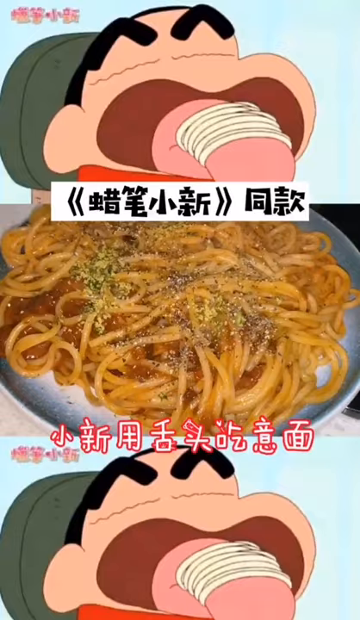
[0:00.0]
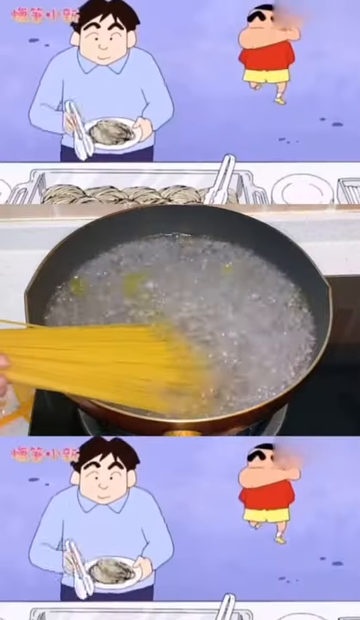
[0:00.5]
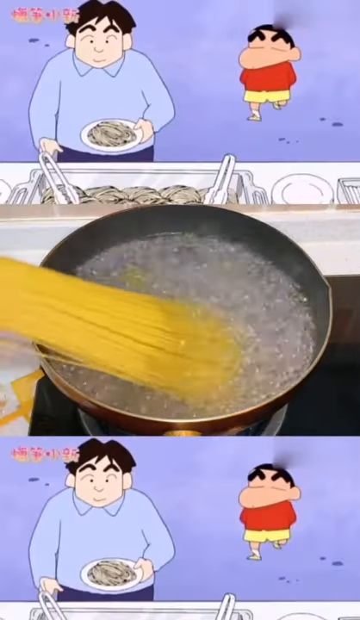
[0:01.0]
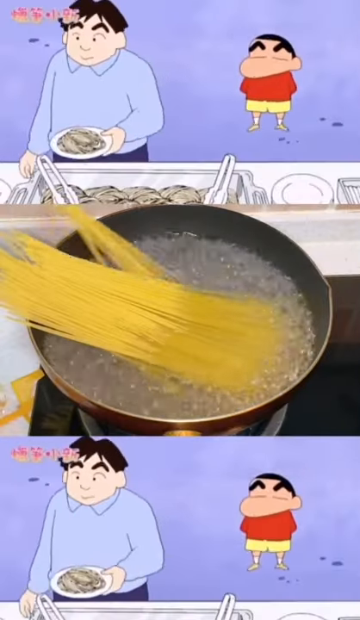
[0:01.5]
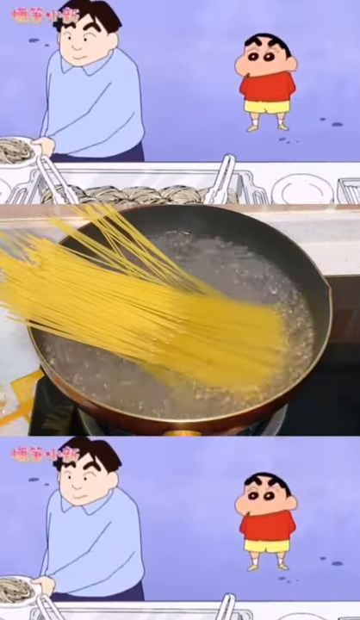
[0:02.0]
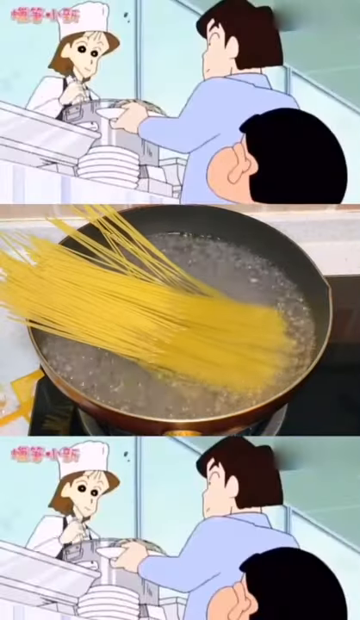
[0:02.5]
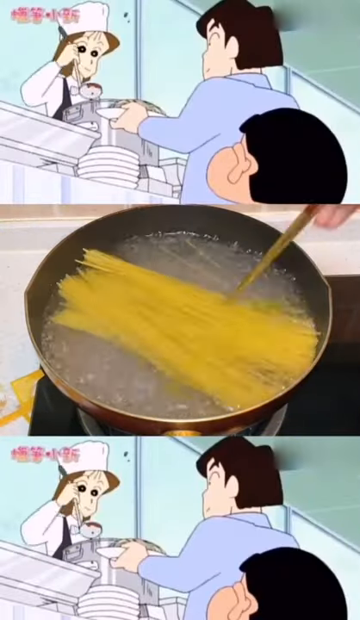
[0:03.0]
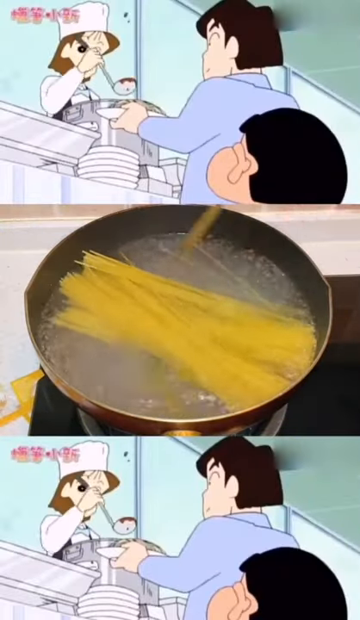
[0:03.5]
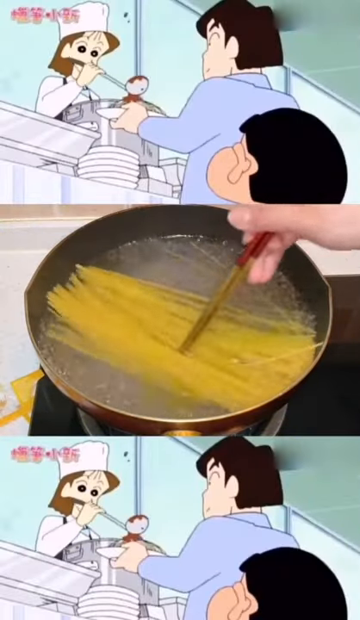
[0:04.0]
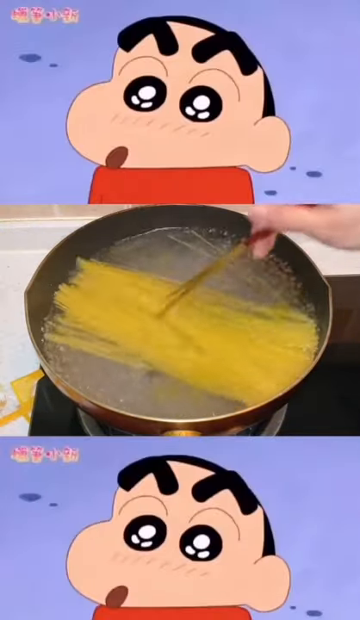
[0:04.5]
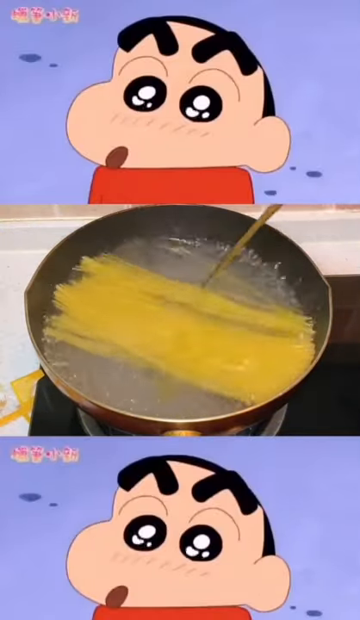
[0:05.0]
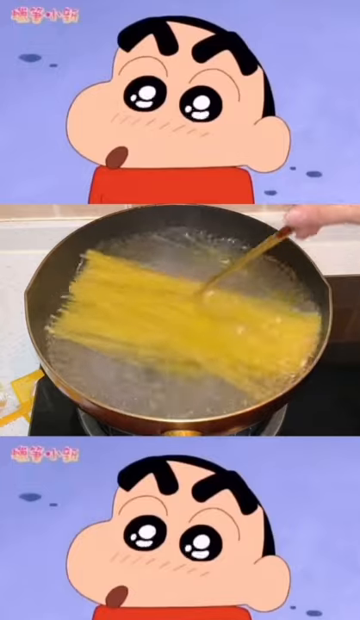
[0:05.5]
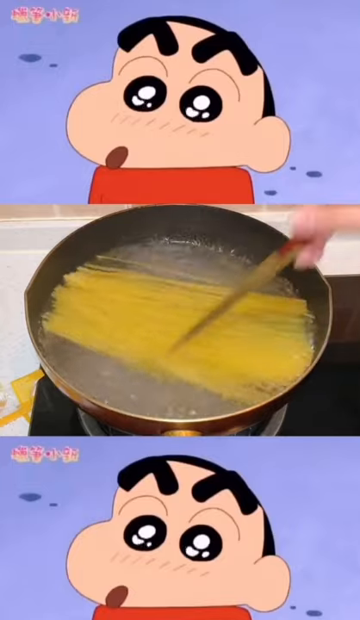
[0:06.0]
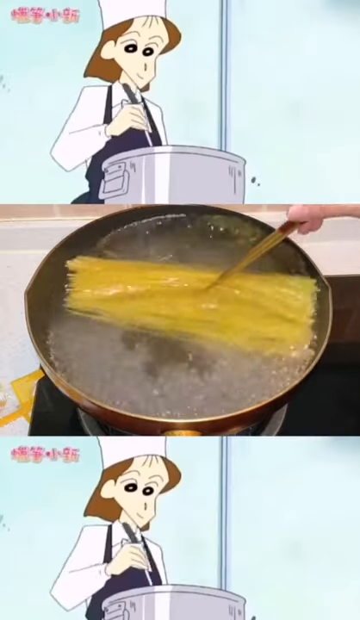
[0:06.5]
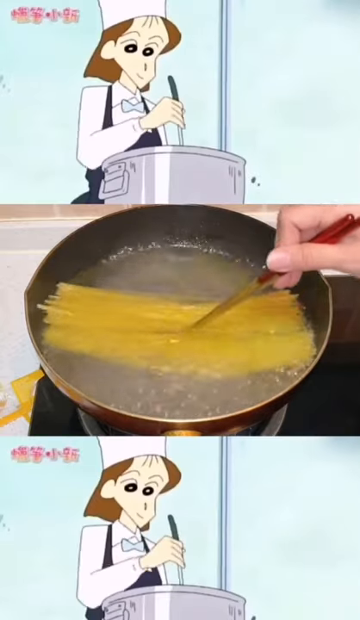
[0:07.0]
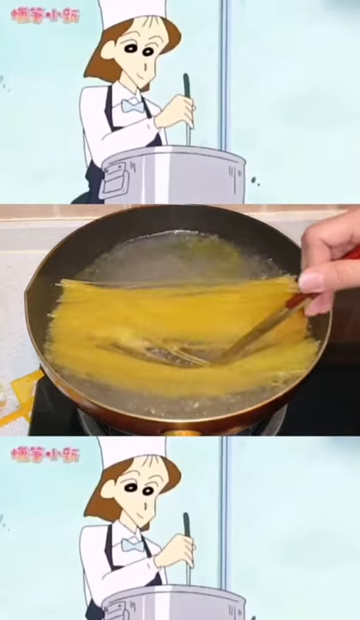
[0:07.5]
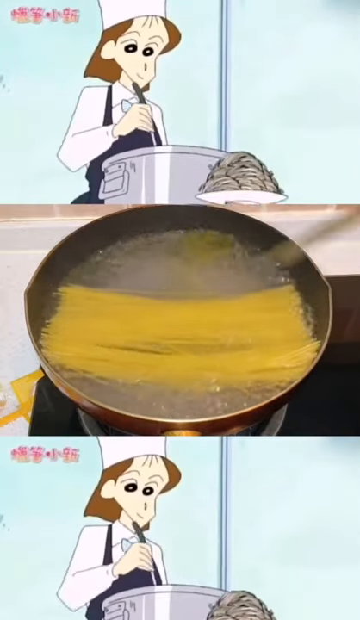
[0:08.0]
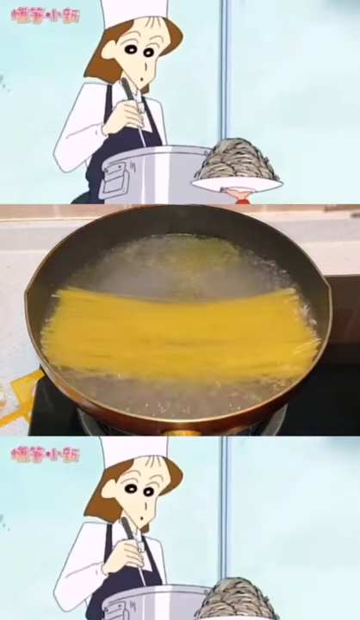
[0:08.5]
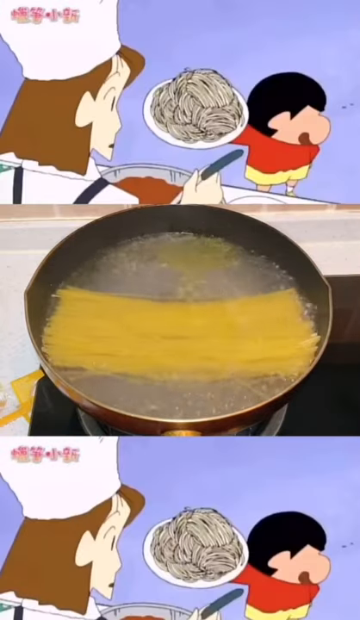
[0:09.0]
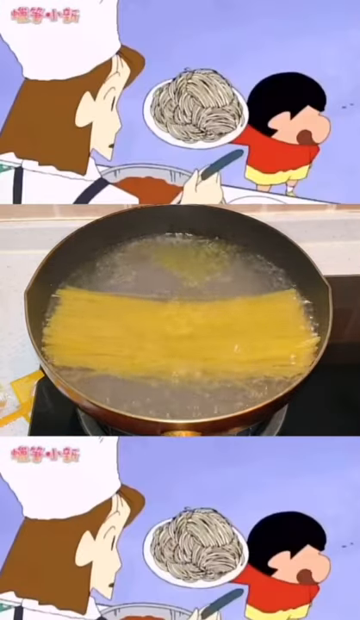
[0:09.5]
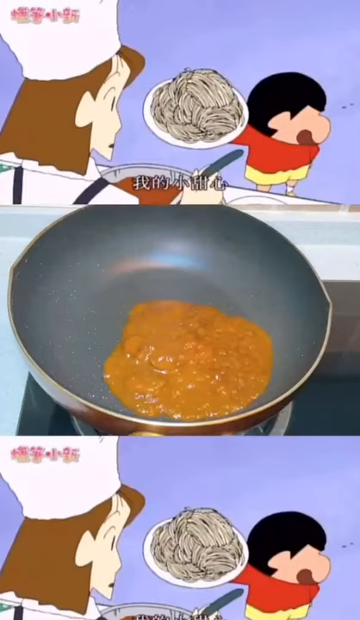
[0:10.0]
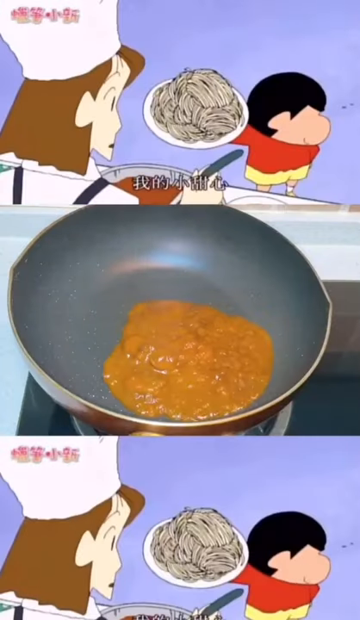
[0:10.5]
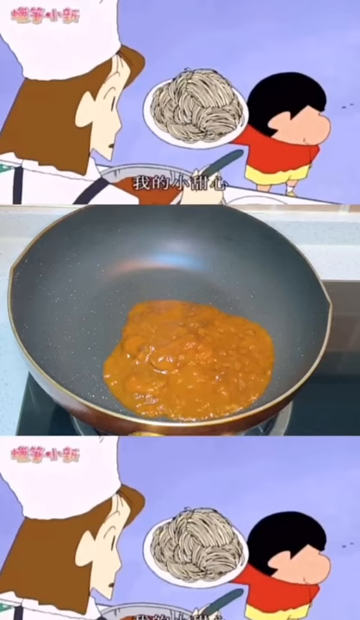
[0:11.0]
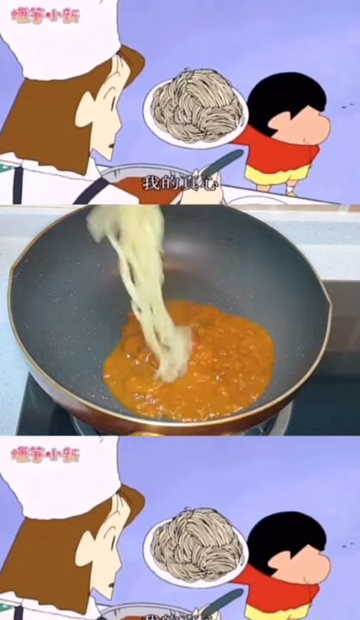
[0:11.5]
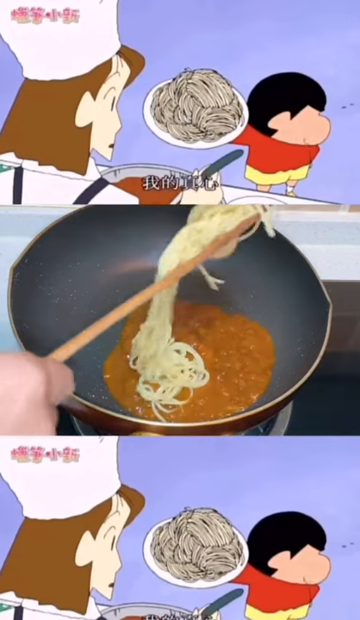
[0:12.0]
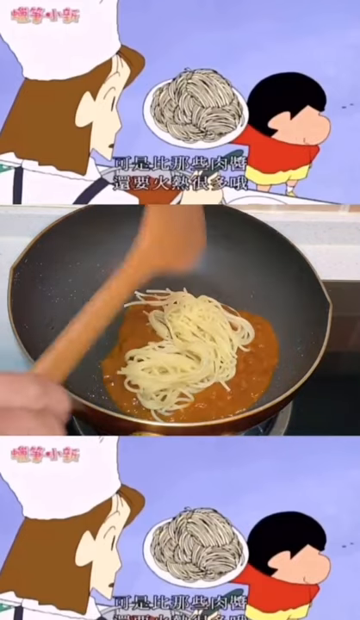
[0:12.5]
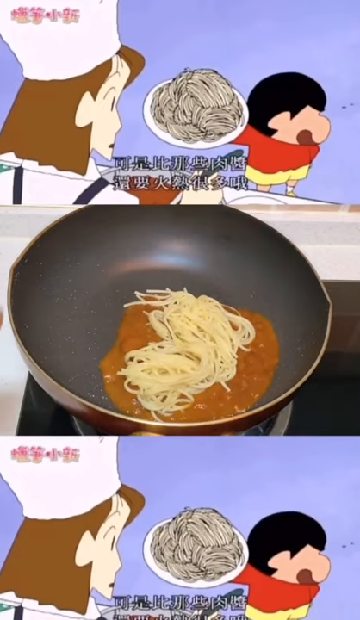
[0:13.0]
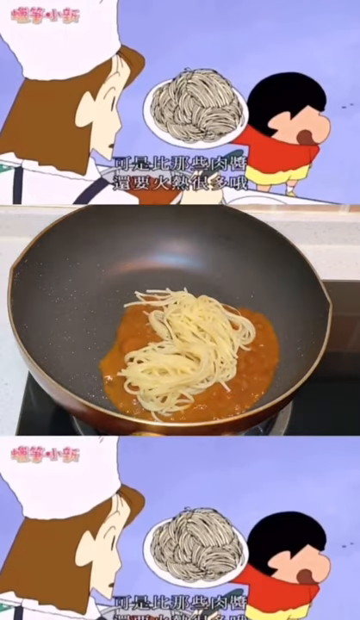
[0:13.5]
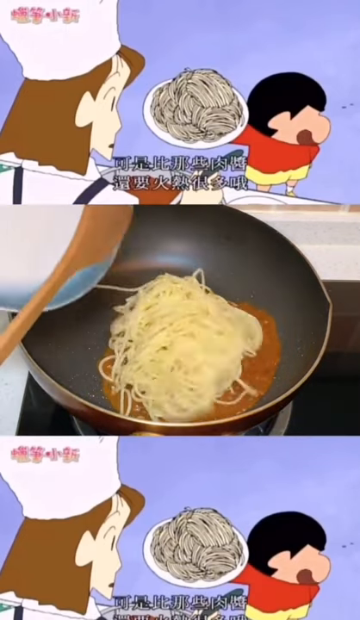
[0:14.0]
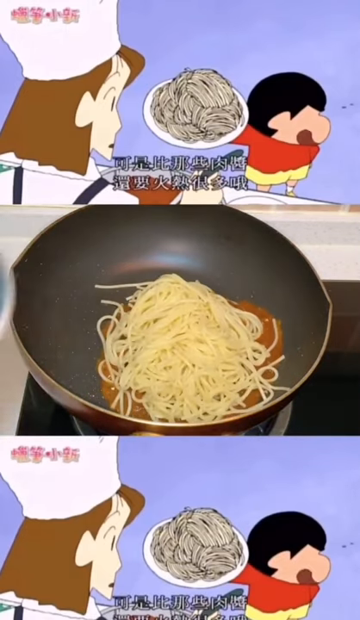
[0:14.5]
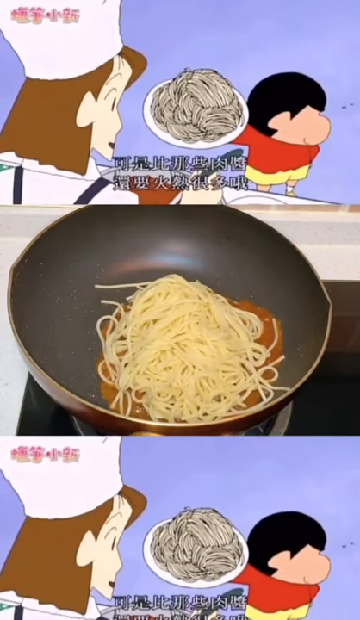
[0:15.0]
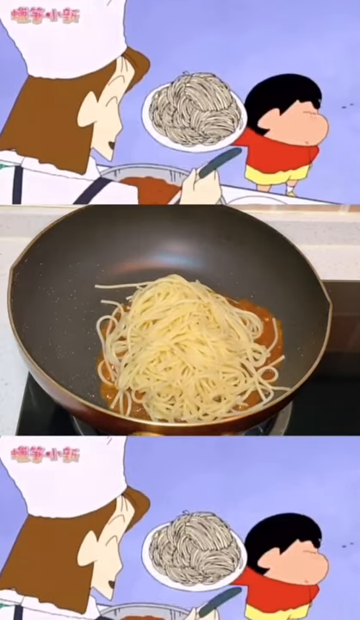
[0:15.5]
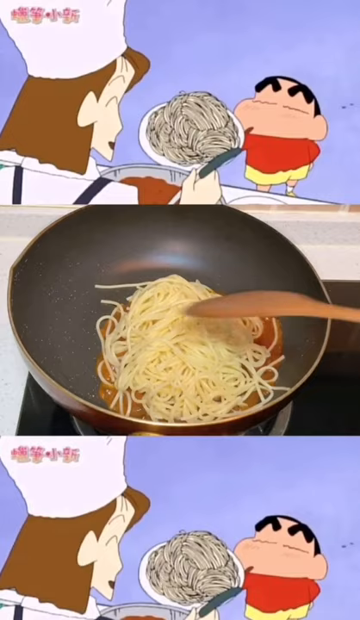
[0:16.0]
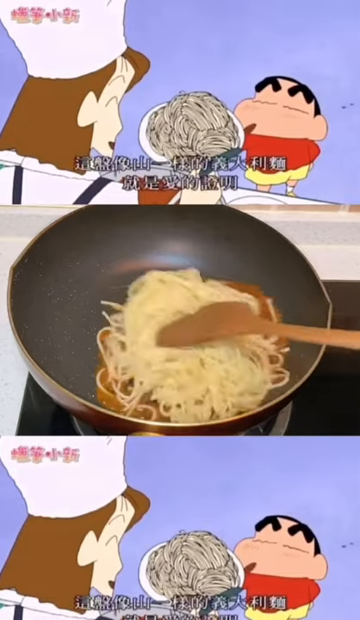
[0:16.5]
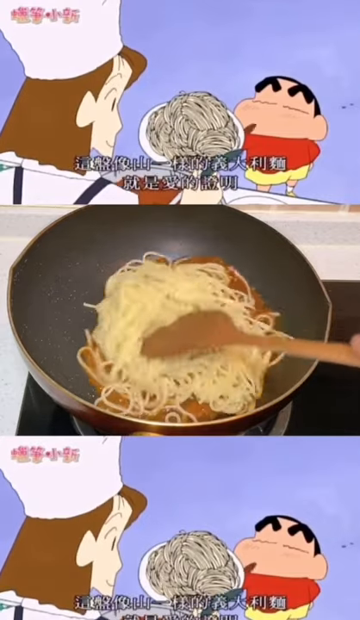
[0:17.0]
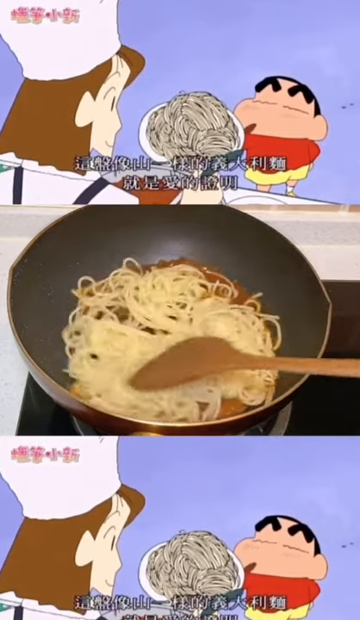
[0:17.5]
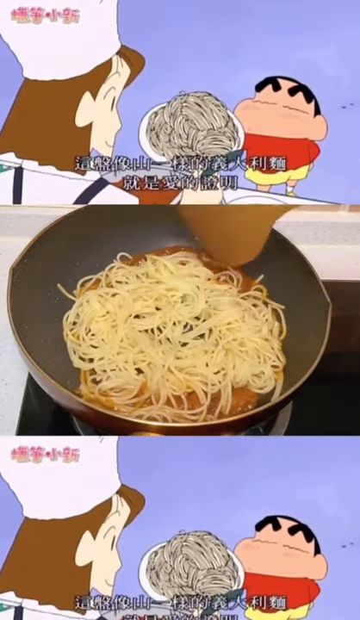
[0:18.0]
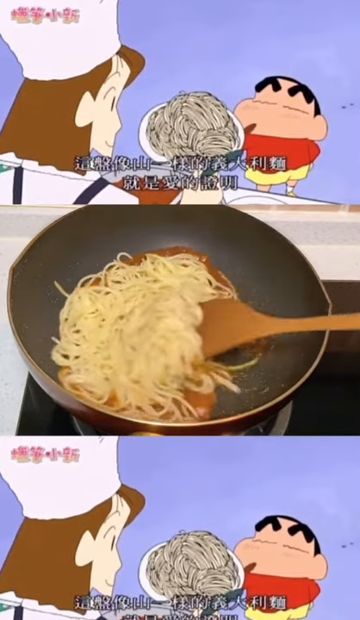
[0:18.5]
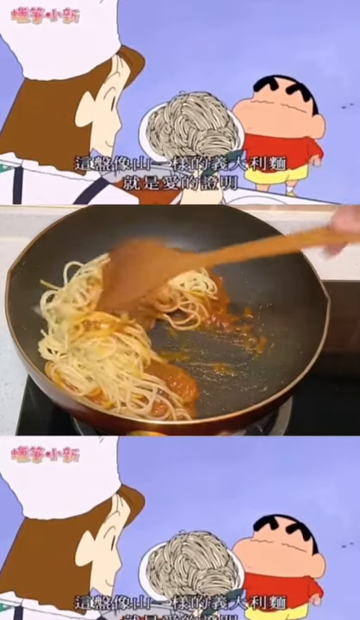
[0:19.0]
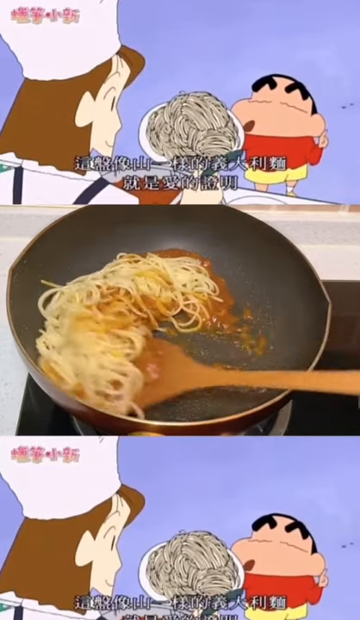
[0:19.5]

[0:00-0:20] An animated cartoon plays at the top and bottom of the screen, the same cartoon in both places, with a video in the middle. In the middle video, someone places what looks like thin spaghetti or noodles into a pot of boiling water. After a couple of seconds there is a cut slightly further ahead, where the noodles are in the pot and already boiling, and the person uses their right hand to separate them with wooden chopsticks. After a few seconds it cuts to a pan with some kind of reddish-brown sauce taking up maybe more than half of the middle of the pan; it seems to be simmering on the stove. The noodles are placed into the pan with a wooden spoon, right on top of the sauce, and the person begins to mix the noodles into the sauce. The animated cartoon plays at the top and bottom the whole time; its content is unclear, but it also involves cooking.